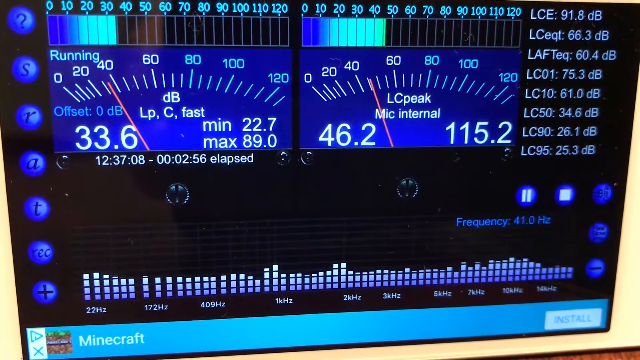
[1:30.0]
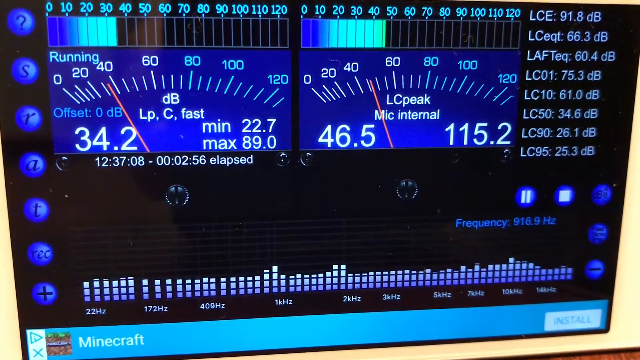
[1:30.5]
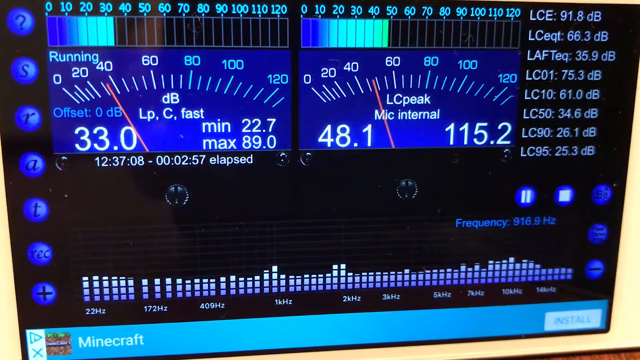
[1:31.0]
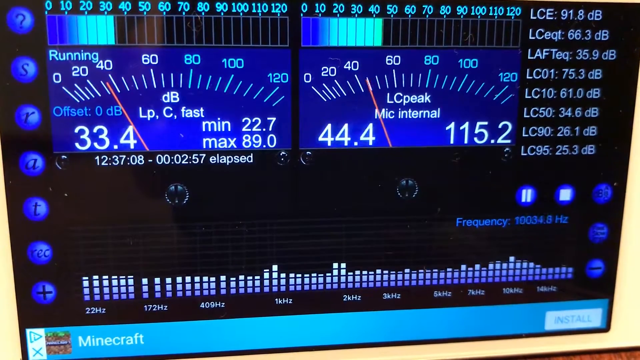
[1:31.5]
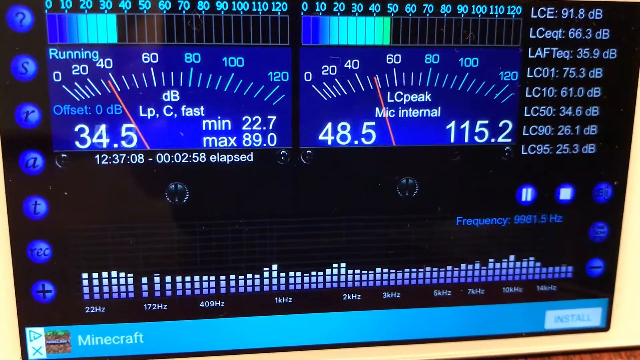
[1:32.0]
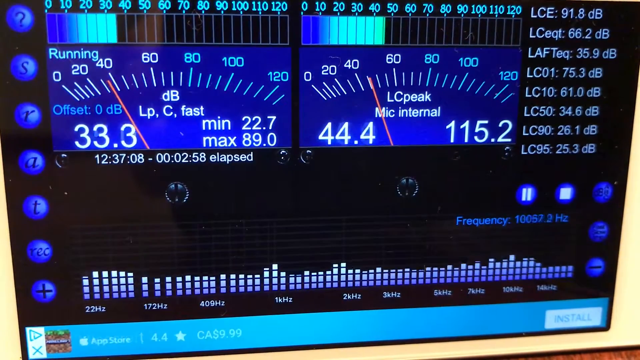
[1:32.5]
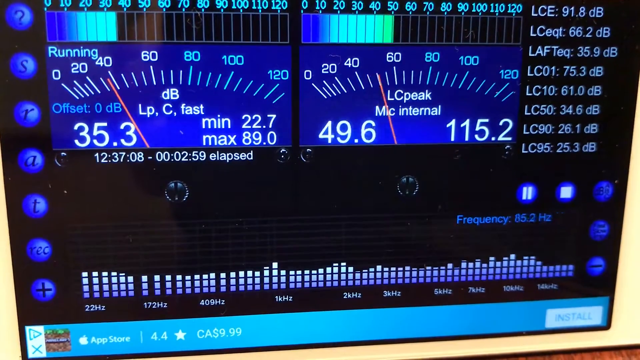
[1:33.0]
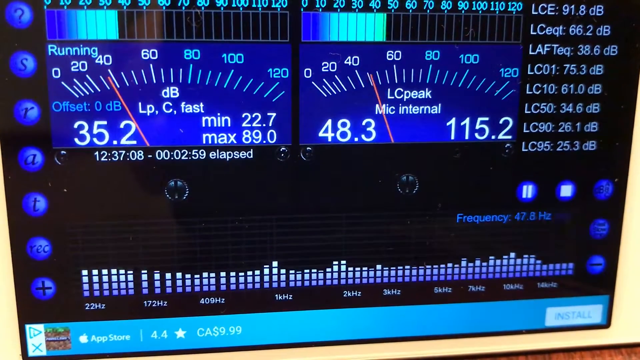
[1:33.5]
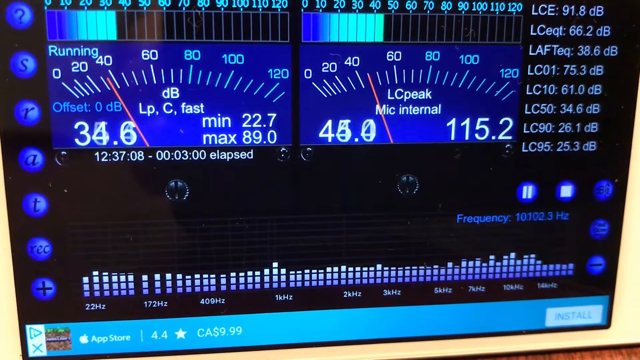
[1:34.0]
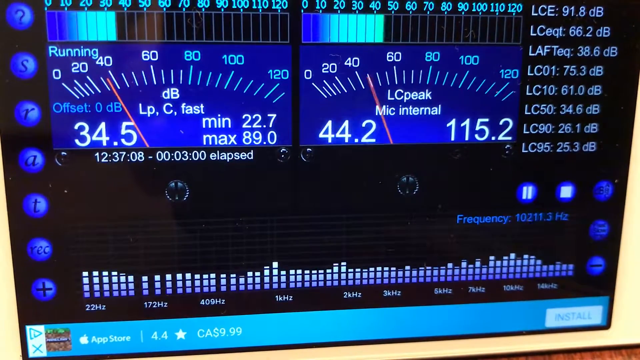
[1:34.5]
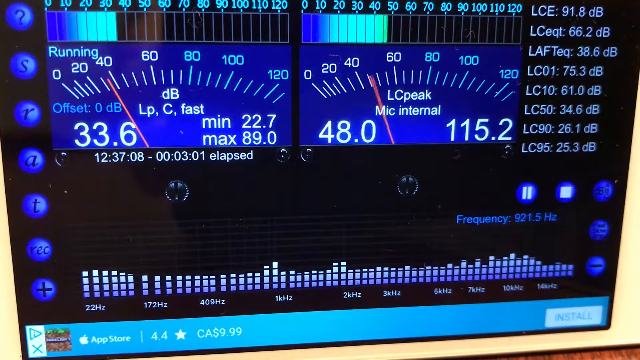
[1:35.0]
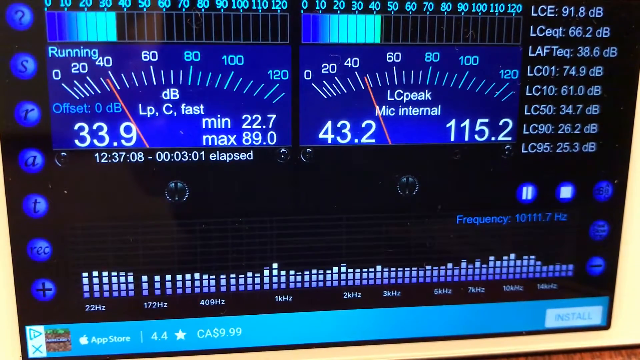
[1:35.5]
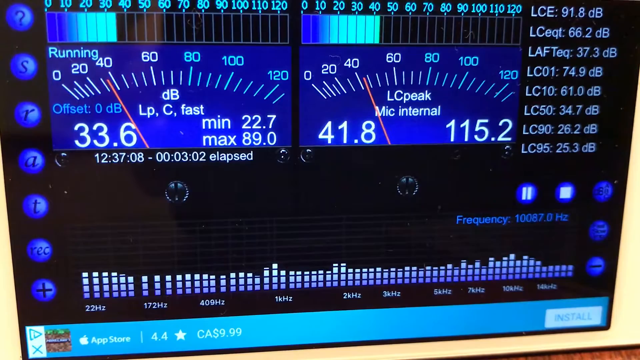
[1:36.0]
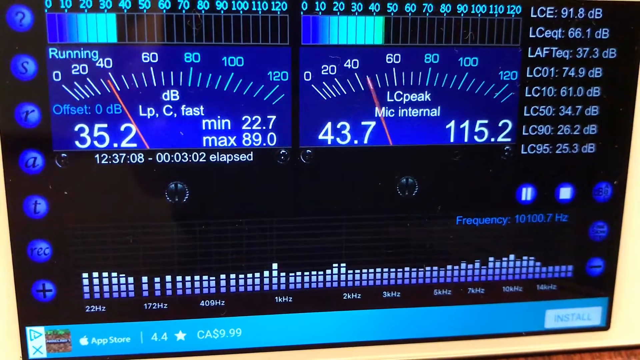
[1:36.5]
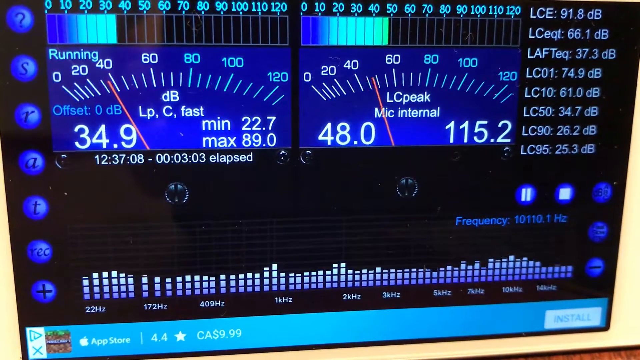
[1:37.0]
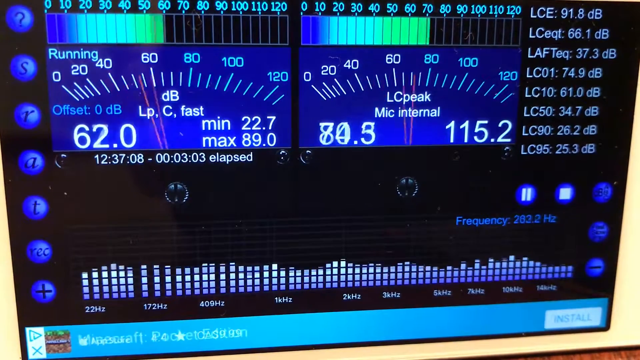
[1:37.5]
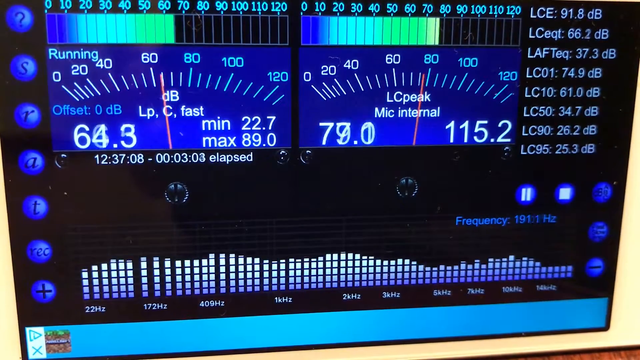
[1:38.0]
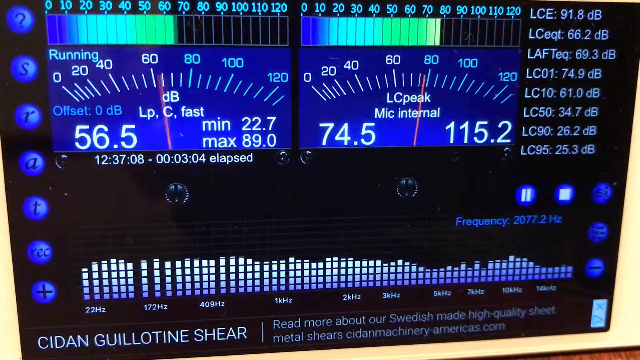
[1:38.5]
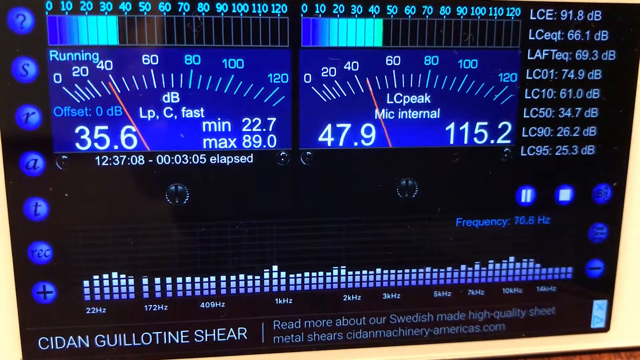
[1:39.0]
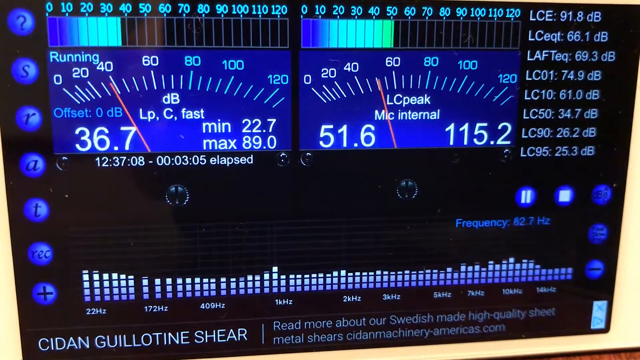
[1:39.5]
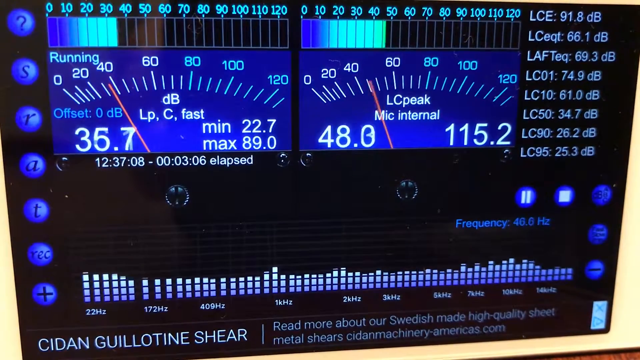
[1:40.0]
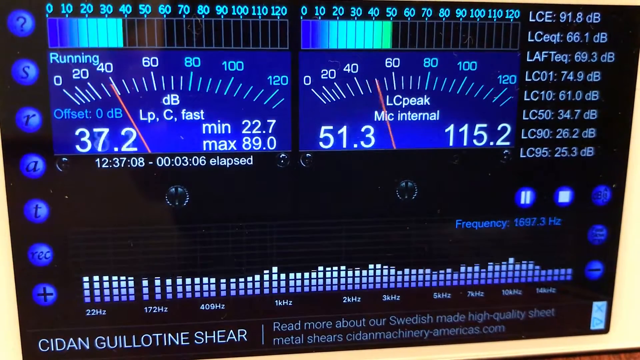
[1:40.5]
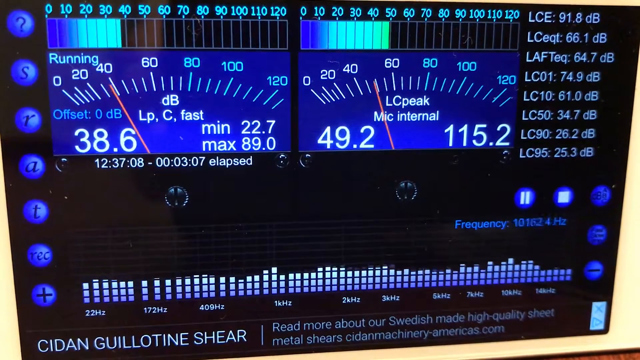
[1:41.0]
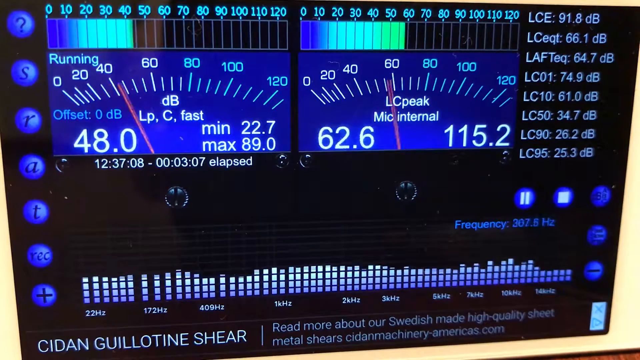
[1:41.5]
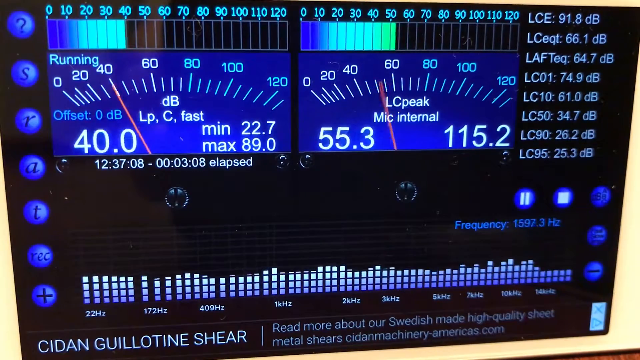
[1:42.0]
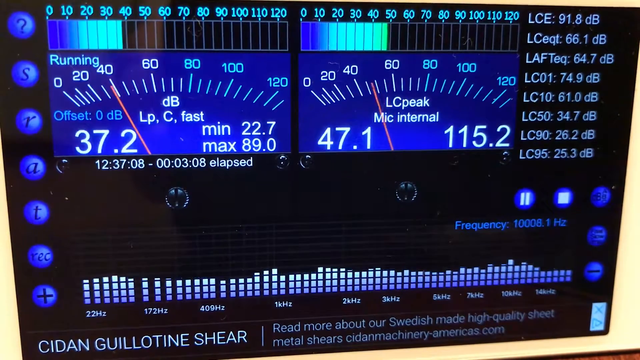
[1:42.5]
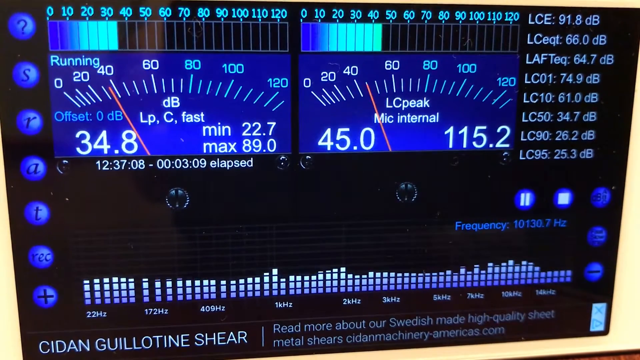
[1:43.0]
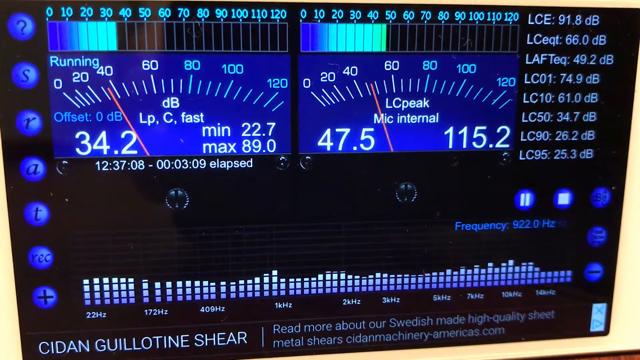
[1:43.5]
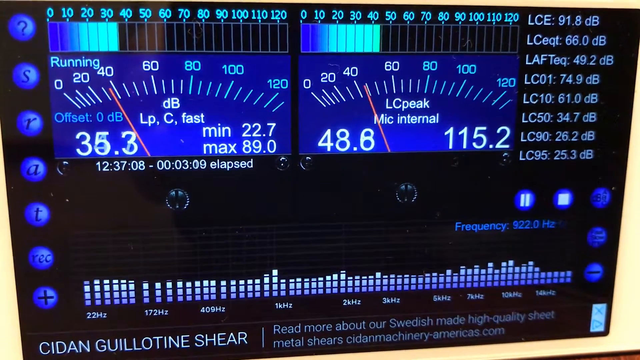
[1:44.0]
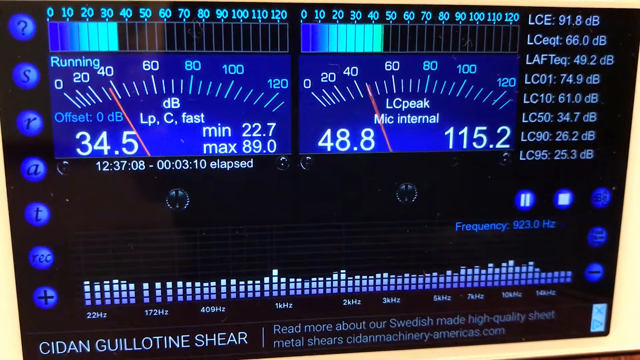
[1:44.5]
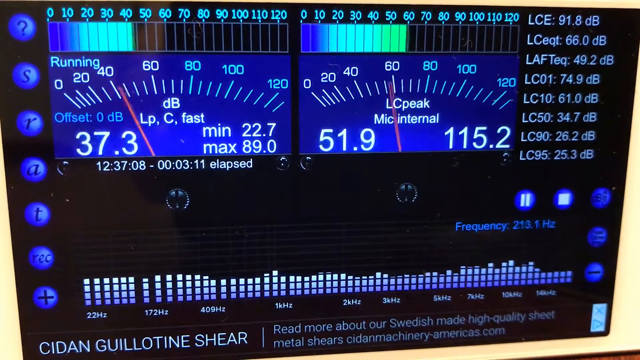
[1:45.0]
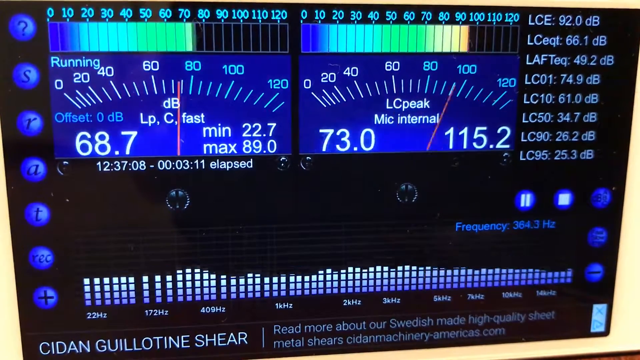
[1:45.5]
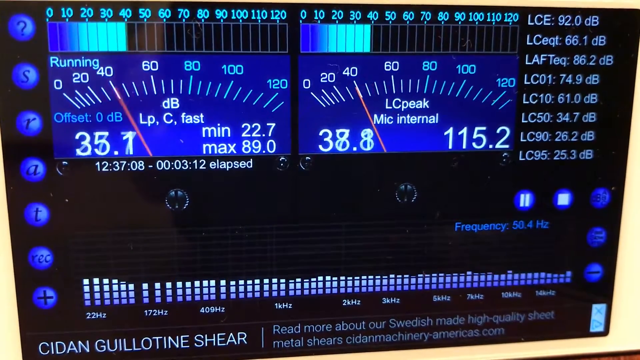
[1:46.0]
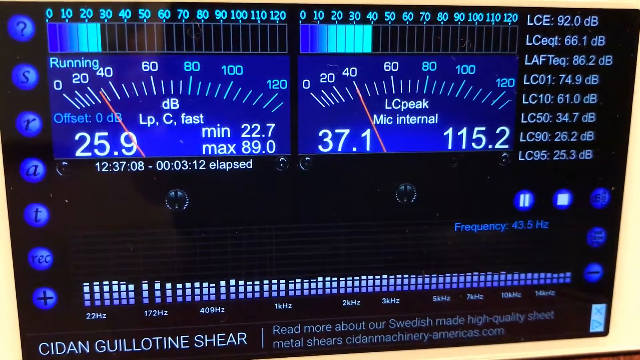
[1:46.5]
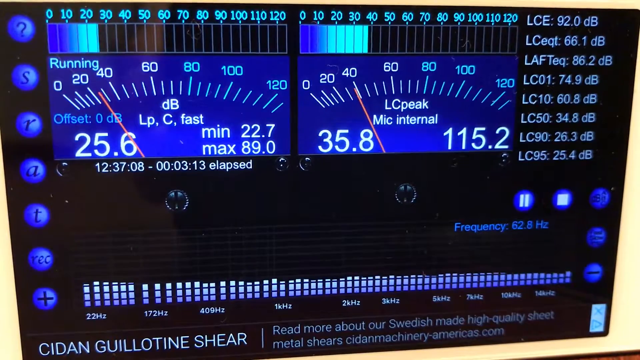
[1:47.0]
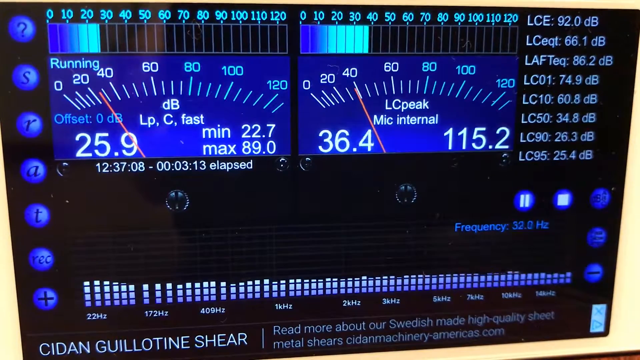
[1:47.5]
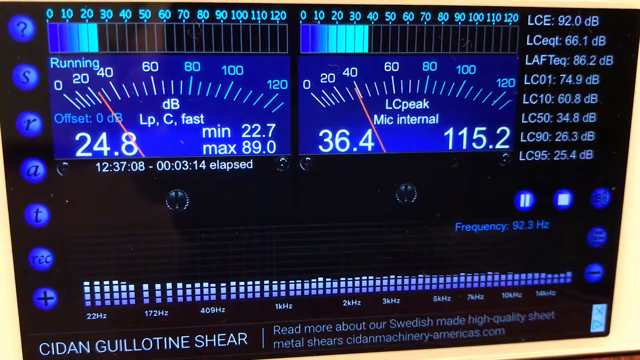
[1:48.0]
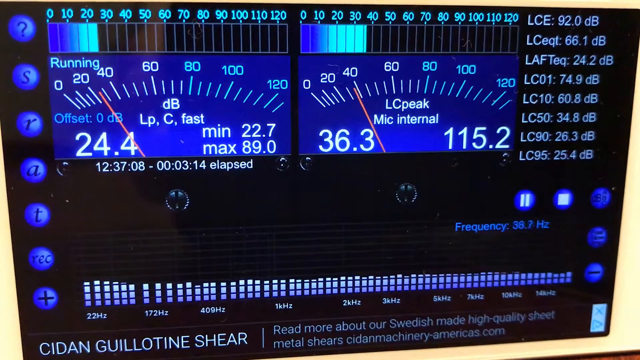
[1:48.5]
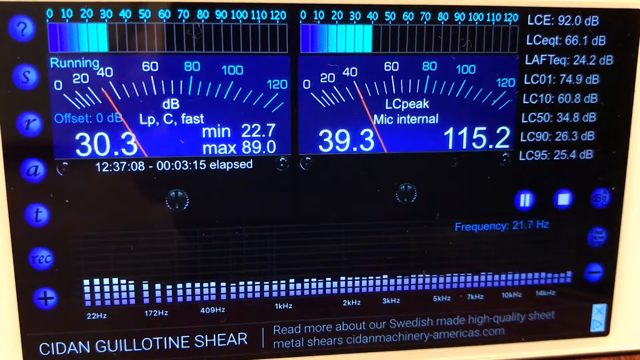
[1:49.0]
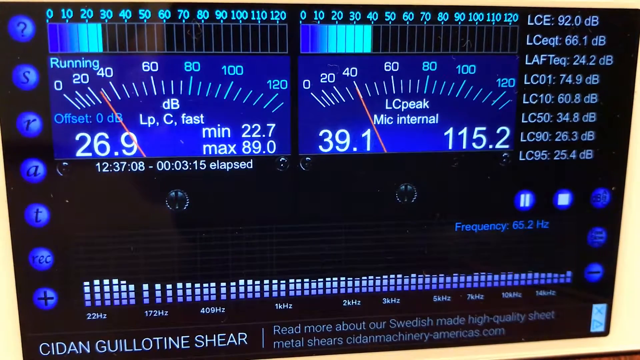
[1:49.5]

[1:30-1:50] The camera is very zoomed in on an app on a white iPhone that appears to be measuring a recording or music, showing decibels and peak levels on the mic. The hands on the scale move between 40 and 60, then peak all the way up to 80 and go back down. Two bars across the top move in sync with the gauge, and the one on the right peaks up to 110, 120. Numbers on the right-hand side show different decibel readings. Blue icons on the left-hand side, of unclear purpose, include a question mark, an S, an R, an A, a T, one that says "recording", and a plus sign. Ads run across the bottom, so the app is freeware.